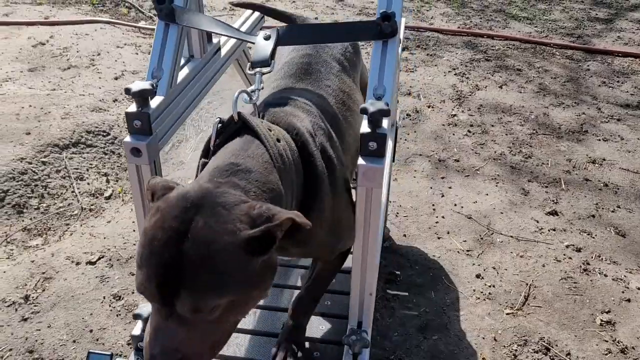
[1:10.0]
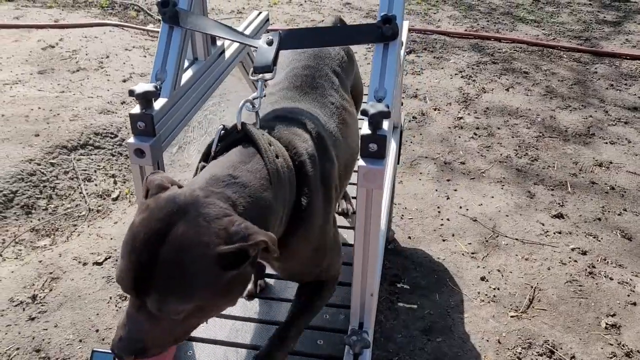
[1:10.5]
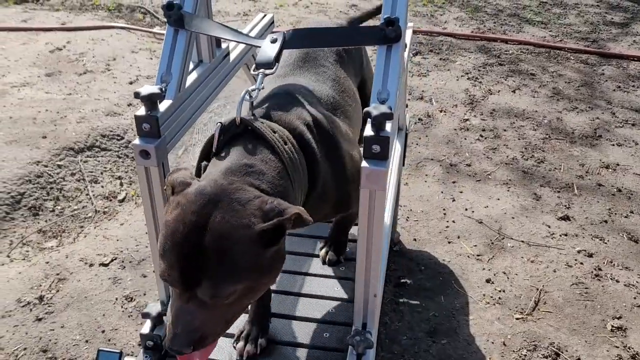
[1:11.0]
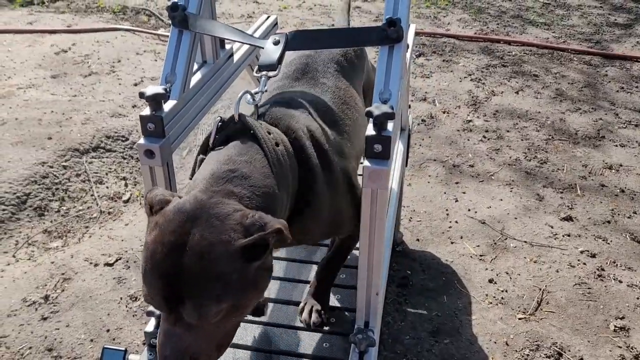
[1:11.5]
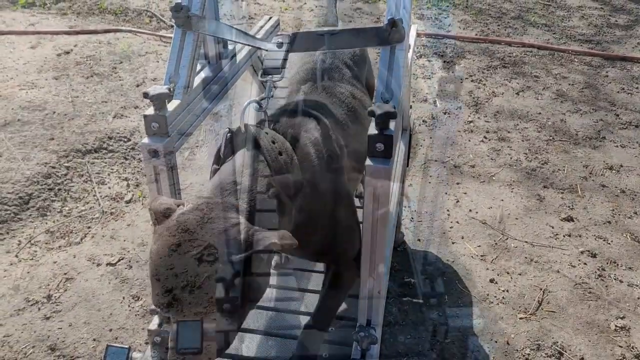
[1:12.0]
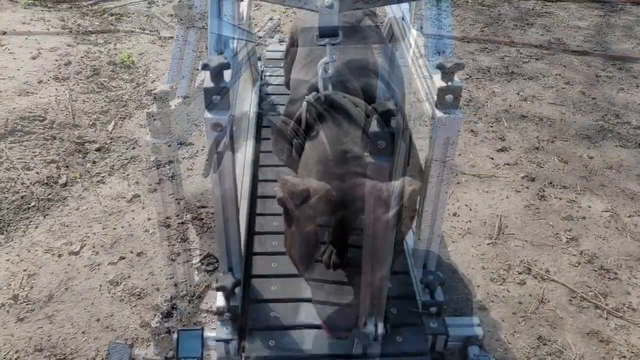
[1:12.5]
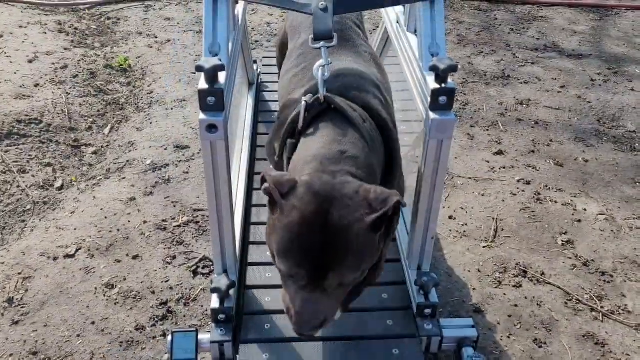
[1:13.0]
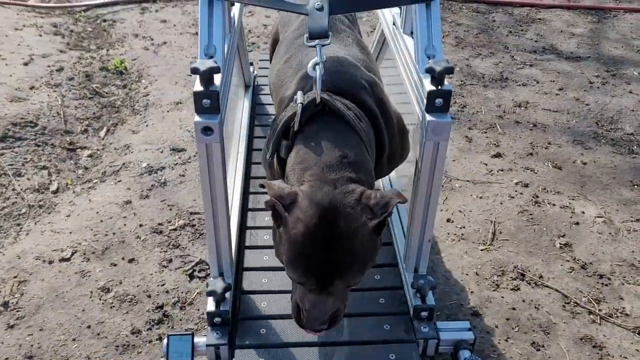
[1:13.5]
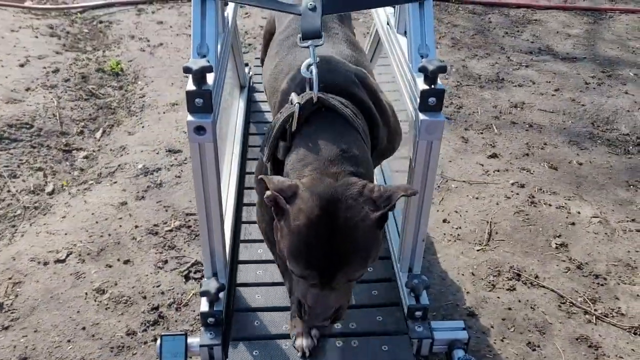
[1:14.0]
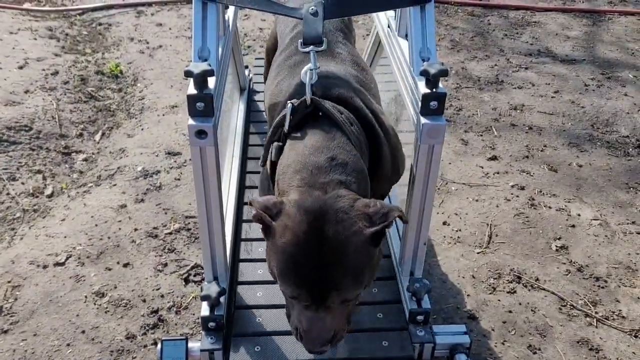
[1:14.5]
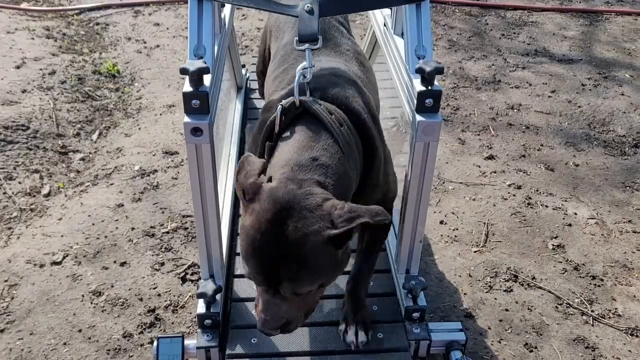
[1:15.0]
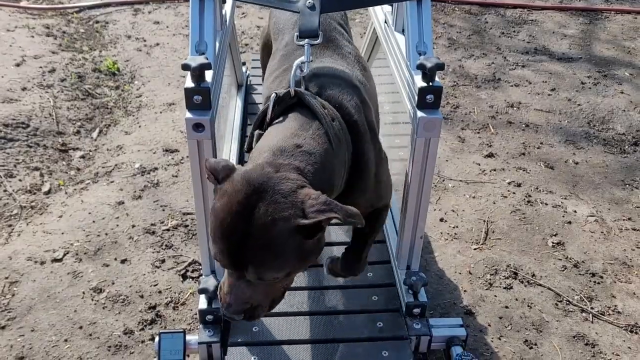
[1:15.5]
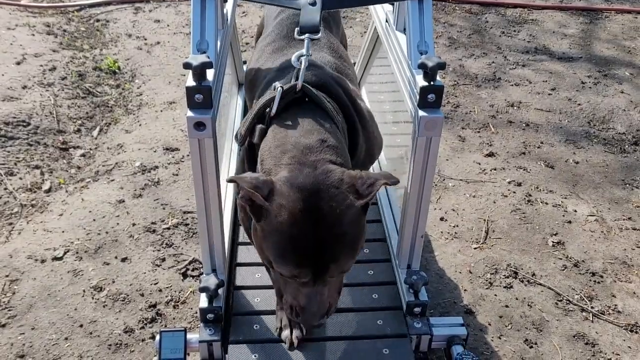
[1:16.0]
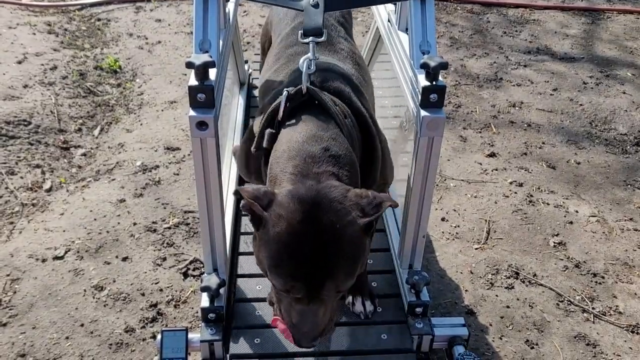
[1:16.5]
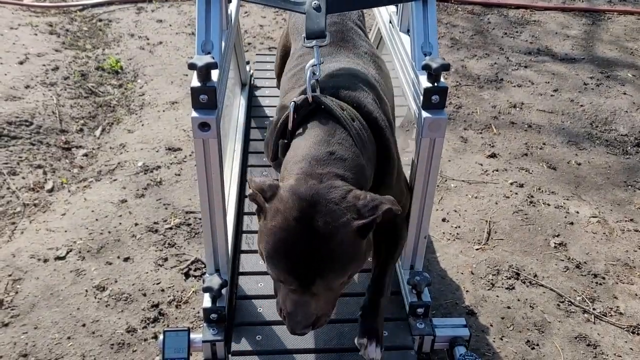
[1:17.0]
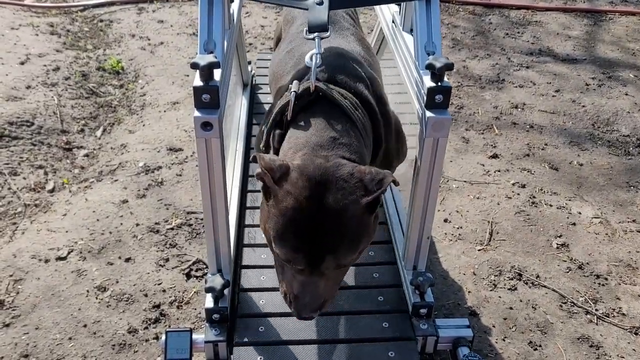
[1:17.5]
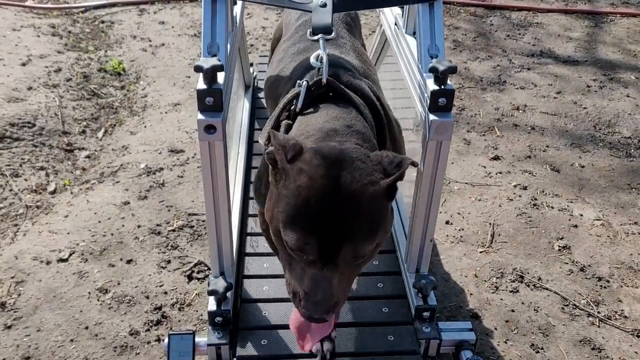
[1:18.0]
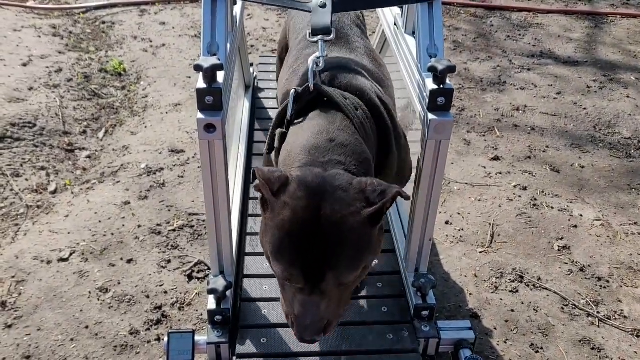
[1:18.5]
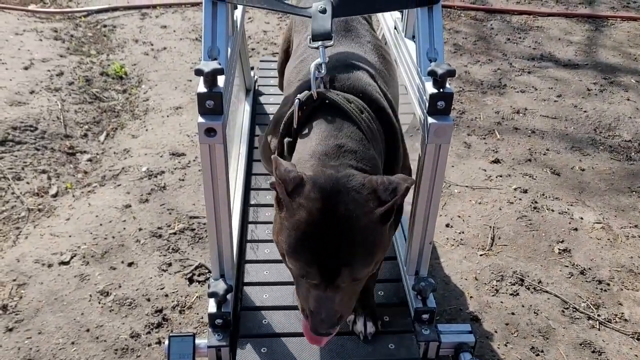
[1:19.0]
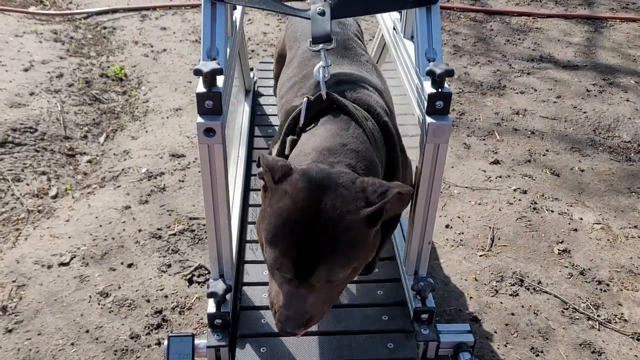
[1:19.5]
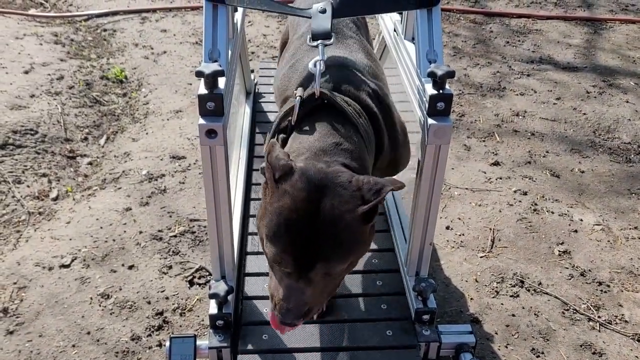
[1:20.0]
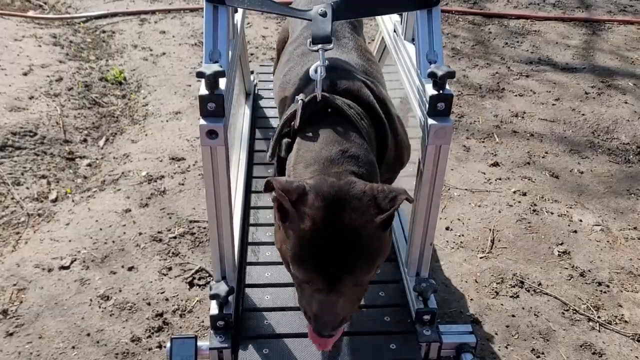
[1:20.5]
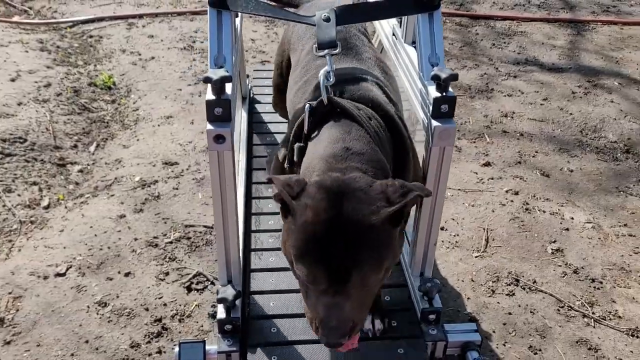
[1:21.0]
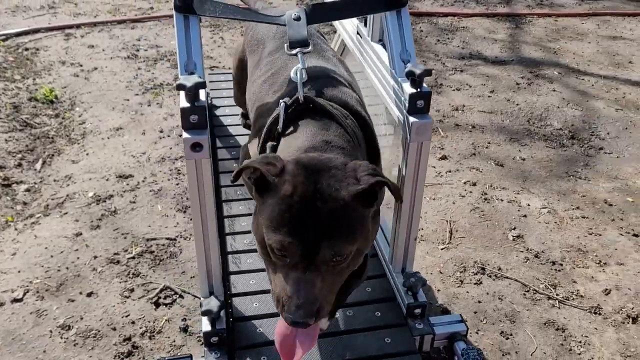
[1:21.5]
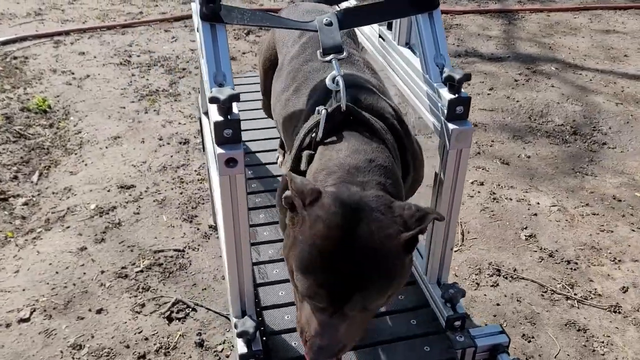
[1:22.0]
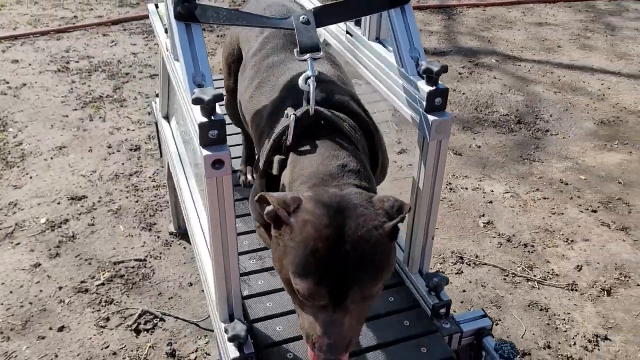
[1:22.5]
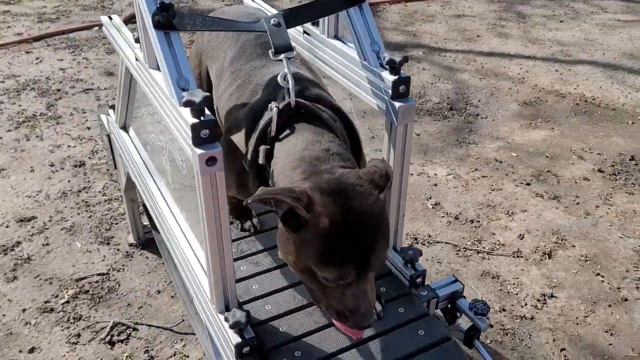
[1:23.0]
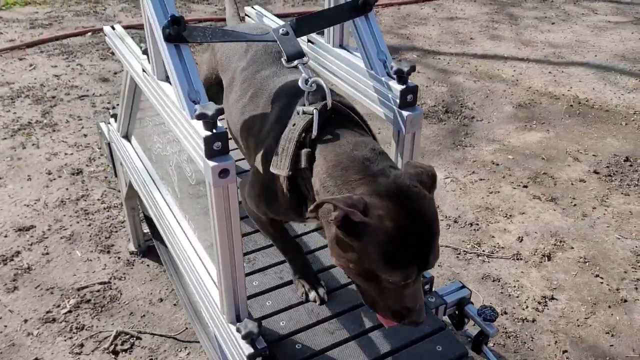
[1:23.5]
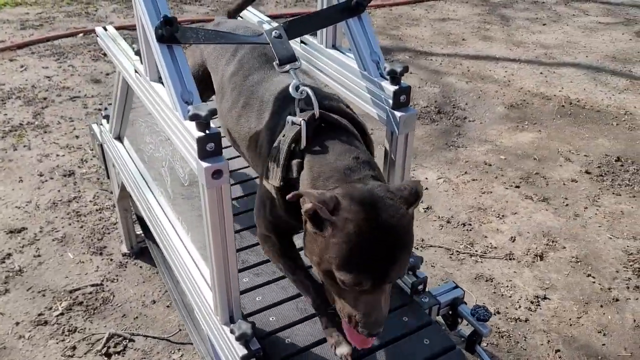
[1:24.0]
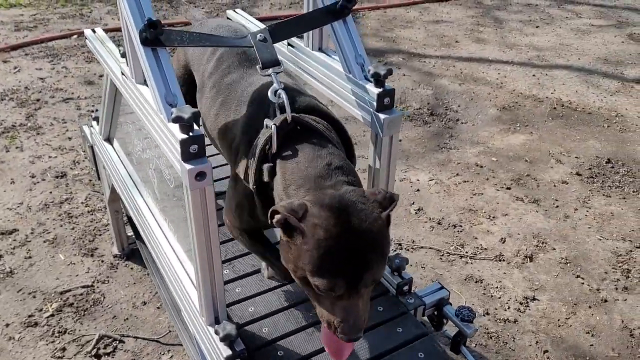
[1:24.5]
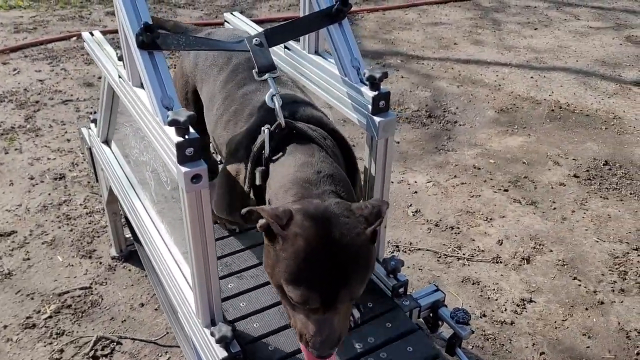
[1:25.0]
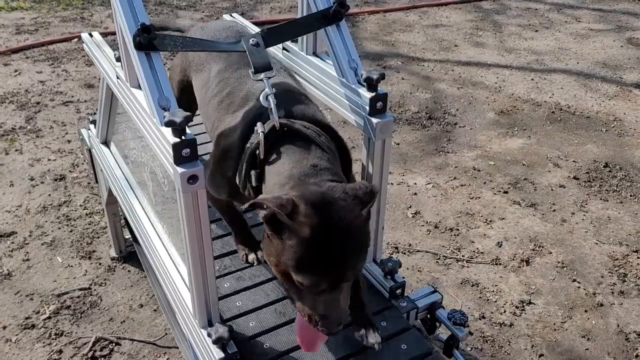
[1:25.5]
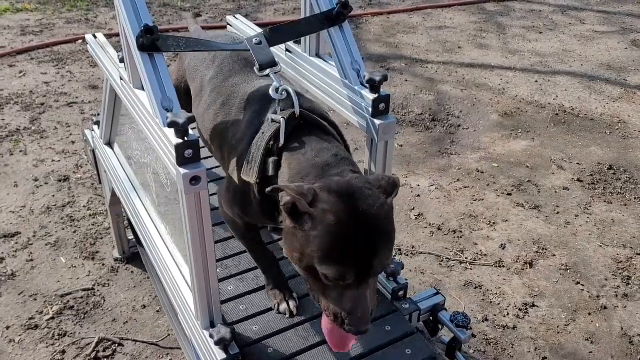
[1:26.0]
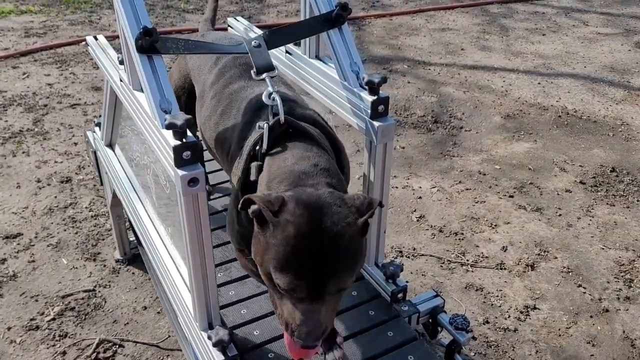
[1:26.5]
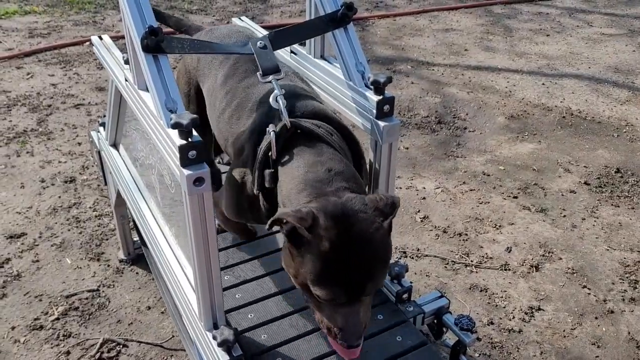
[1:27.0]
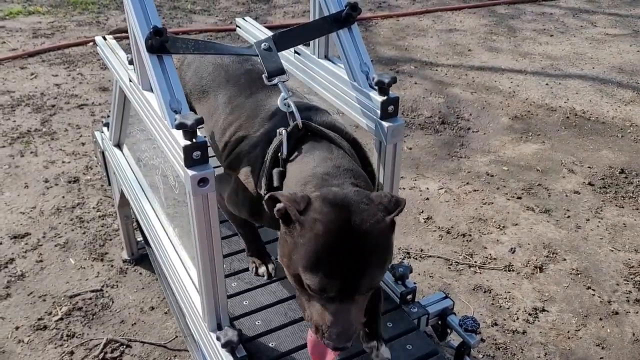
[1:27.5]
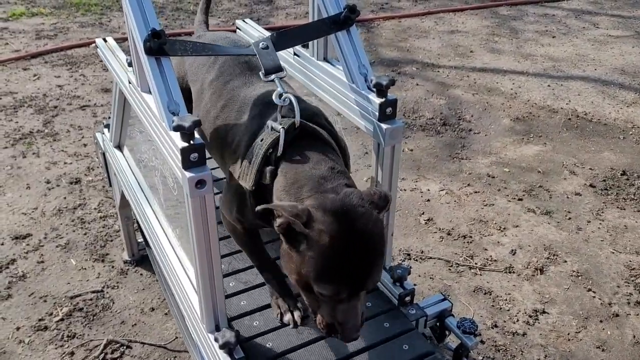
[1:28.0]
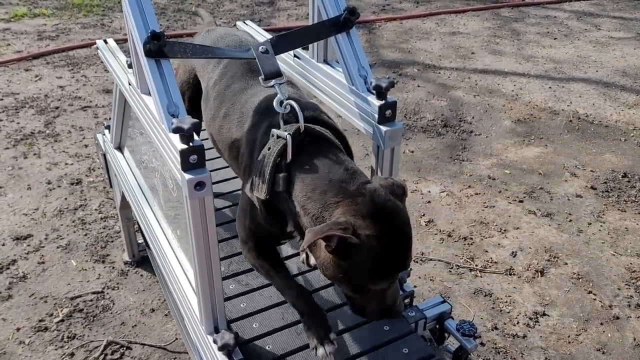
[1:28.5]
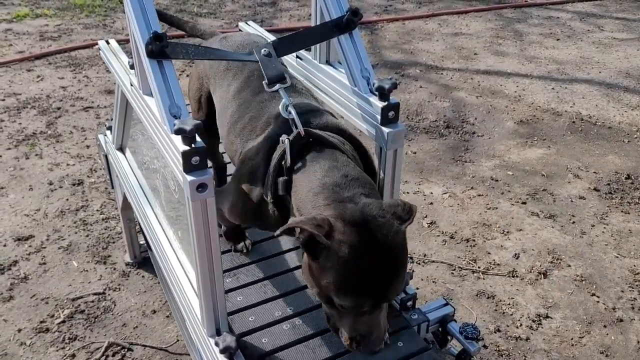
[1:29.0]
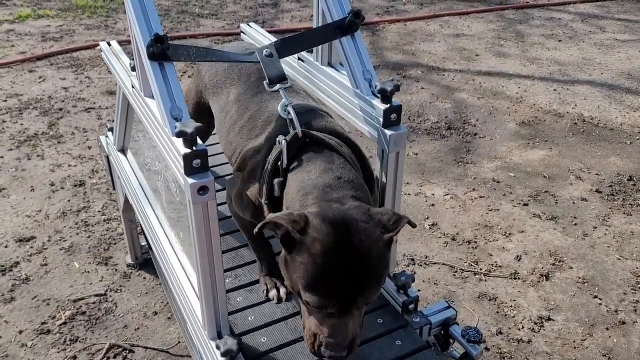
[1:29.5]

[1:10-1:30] The black dog is on what looks like a treadmill and appears to be exercising. The treadmill is running, and the dog is on the conveyor, which looks like it is wired and electrical. With its mouth open, the dog runs at a very slow pace. A belt on its neck straps it and confines it to that space. The dog is in a room.